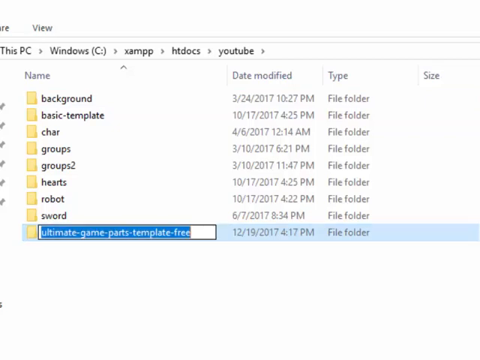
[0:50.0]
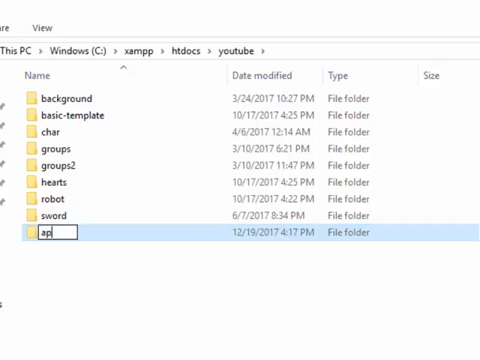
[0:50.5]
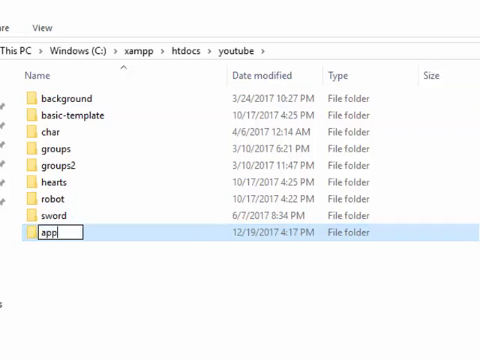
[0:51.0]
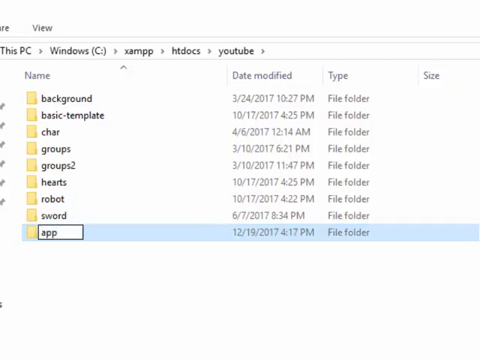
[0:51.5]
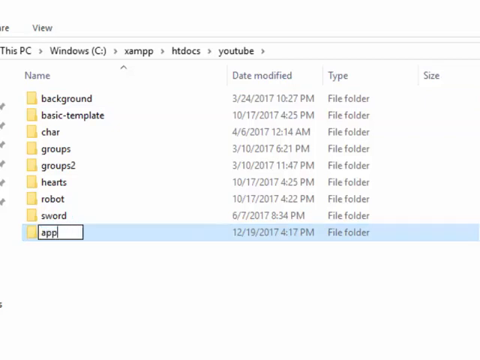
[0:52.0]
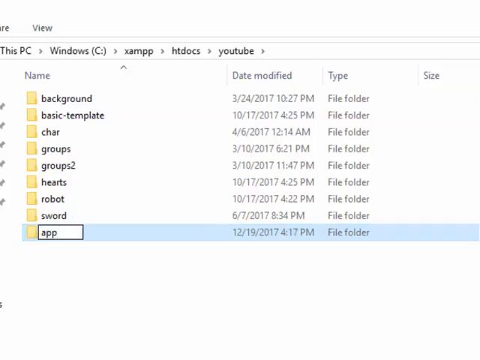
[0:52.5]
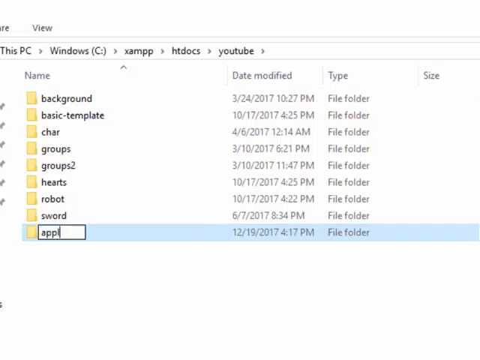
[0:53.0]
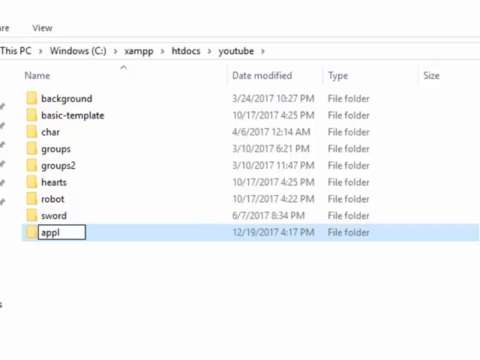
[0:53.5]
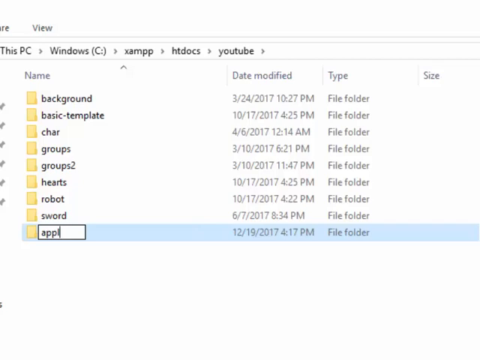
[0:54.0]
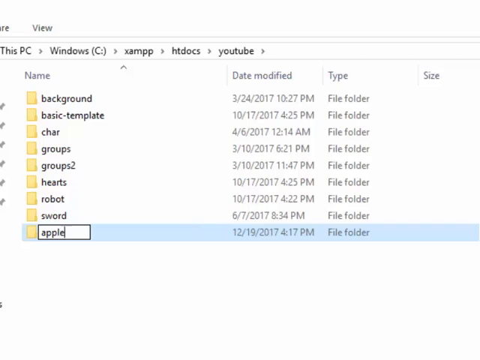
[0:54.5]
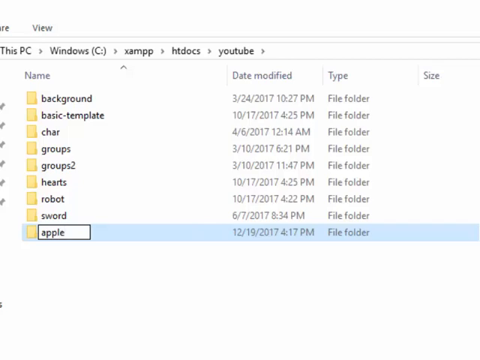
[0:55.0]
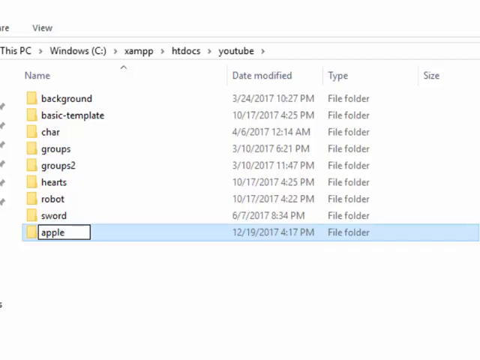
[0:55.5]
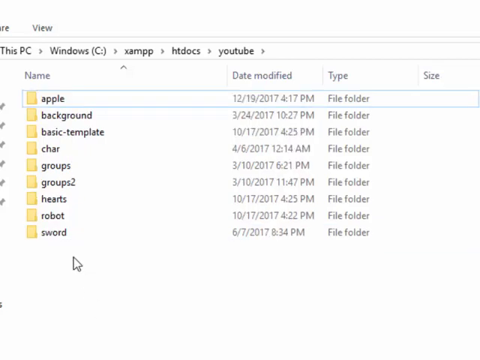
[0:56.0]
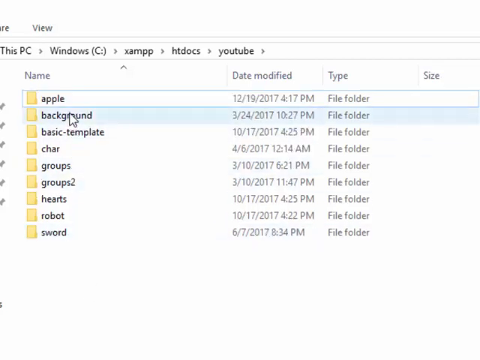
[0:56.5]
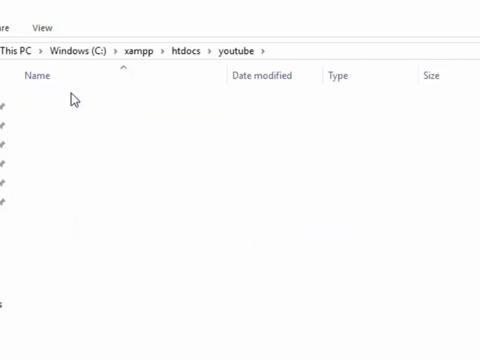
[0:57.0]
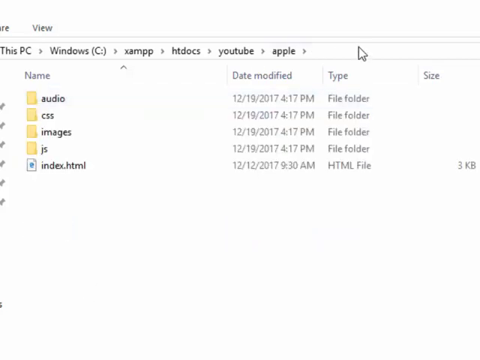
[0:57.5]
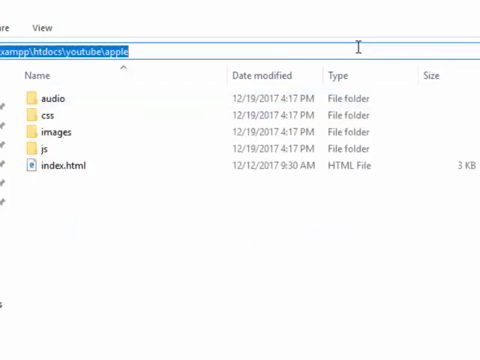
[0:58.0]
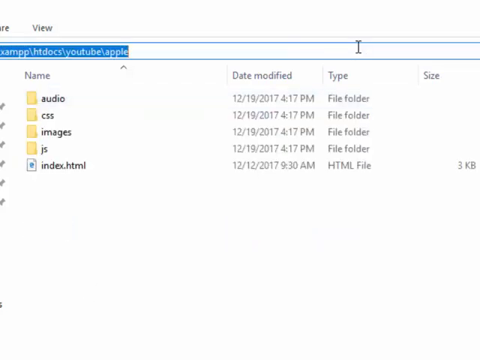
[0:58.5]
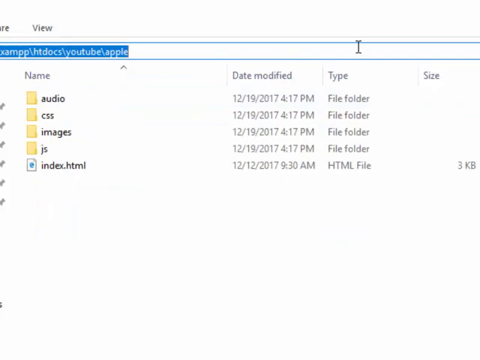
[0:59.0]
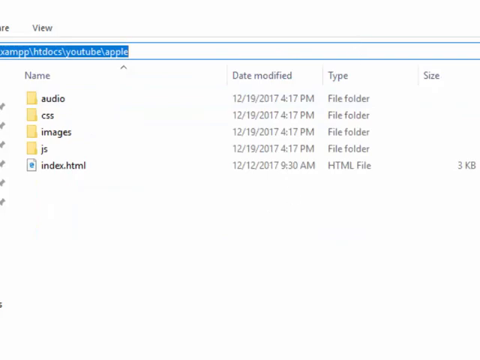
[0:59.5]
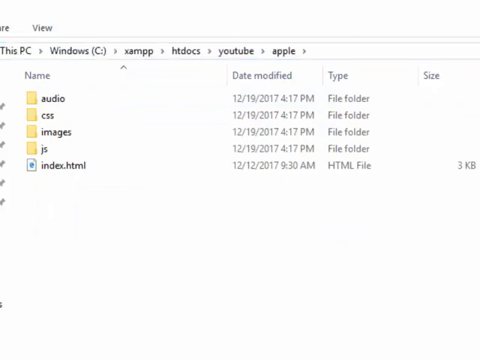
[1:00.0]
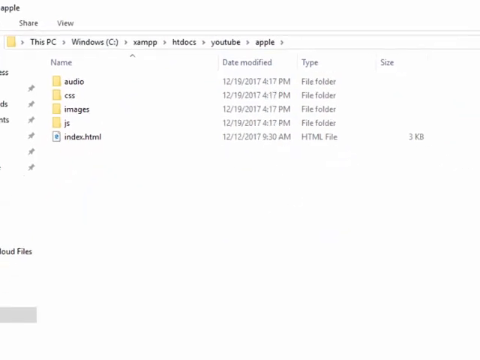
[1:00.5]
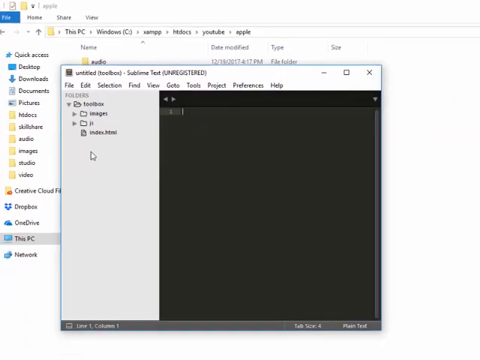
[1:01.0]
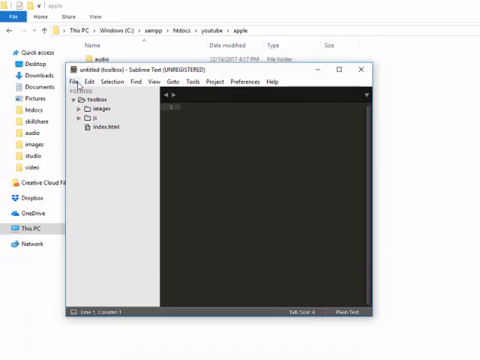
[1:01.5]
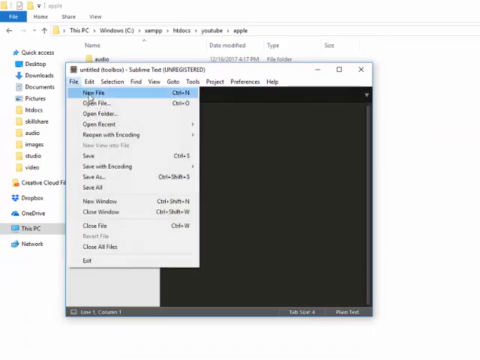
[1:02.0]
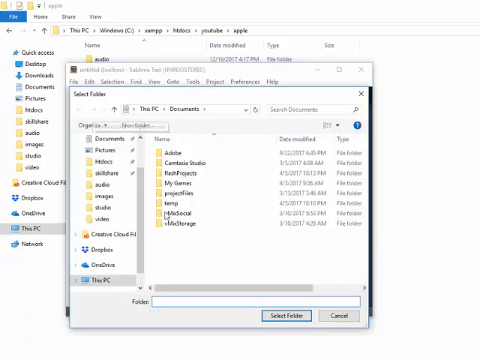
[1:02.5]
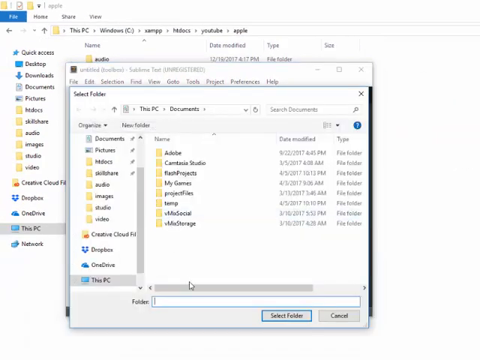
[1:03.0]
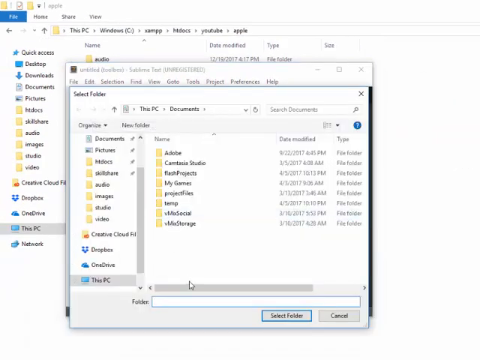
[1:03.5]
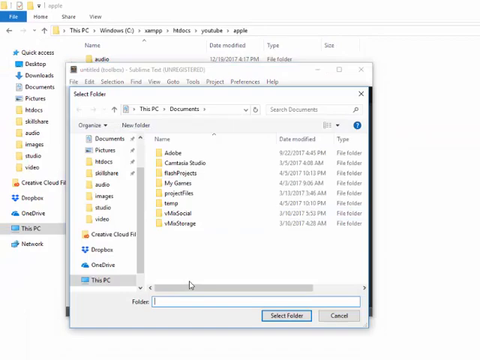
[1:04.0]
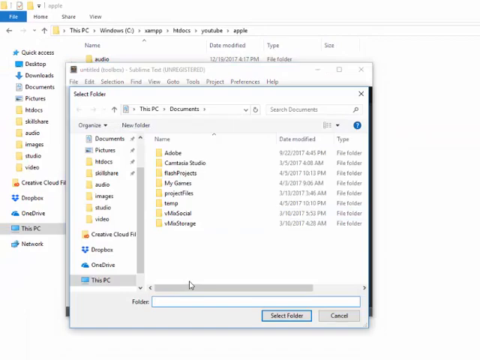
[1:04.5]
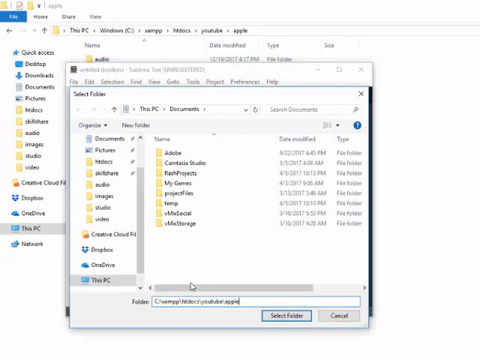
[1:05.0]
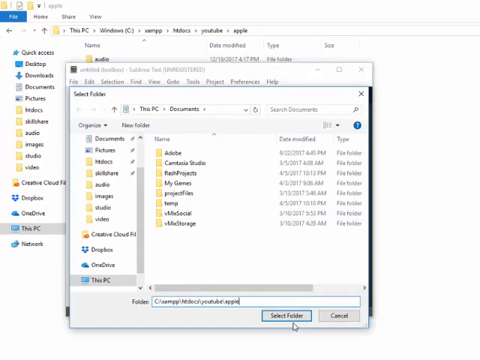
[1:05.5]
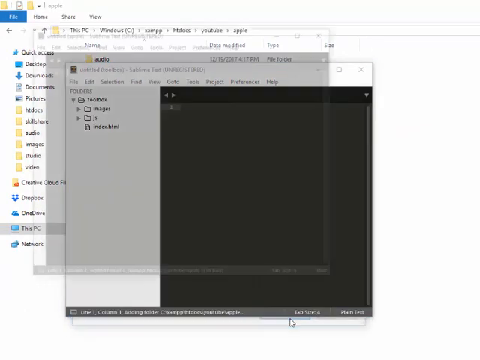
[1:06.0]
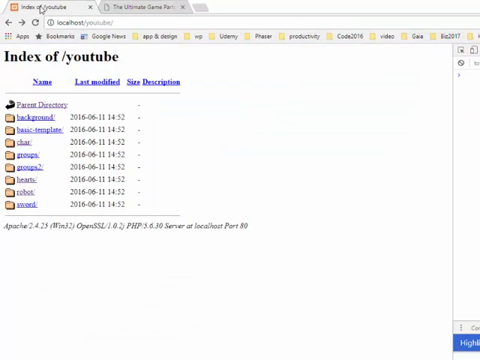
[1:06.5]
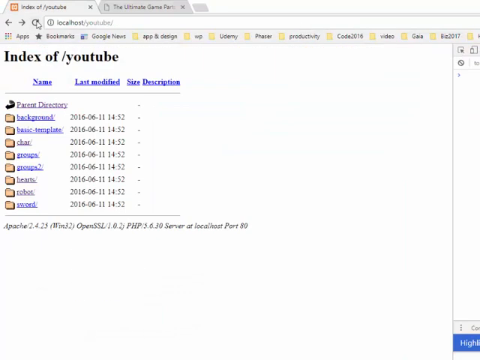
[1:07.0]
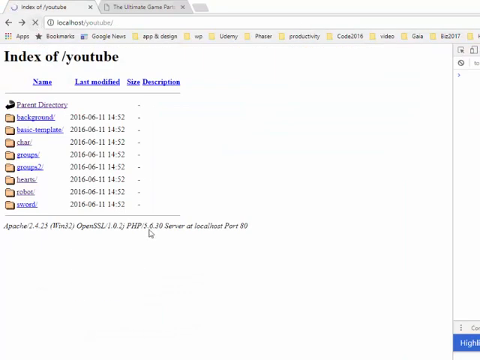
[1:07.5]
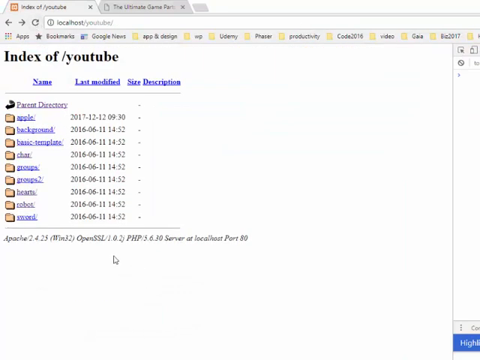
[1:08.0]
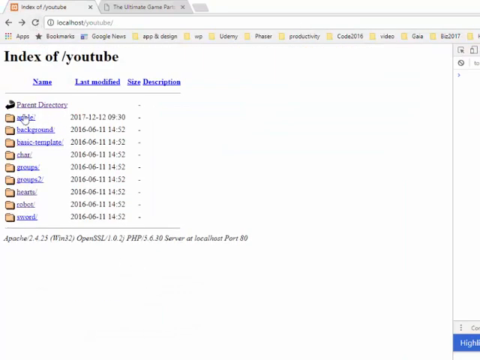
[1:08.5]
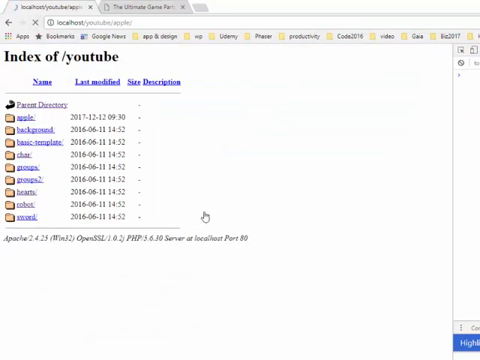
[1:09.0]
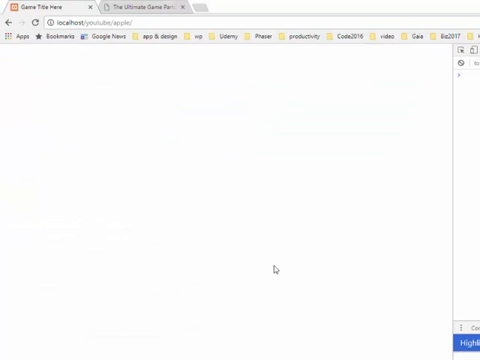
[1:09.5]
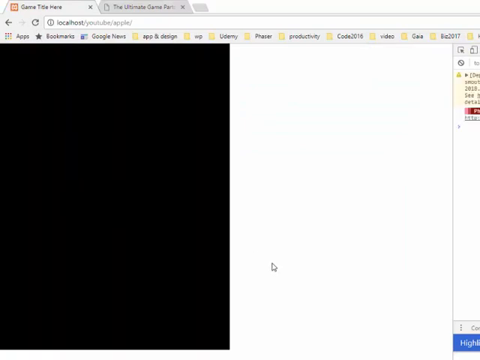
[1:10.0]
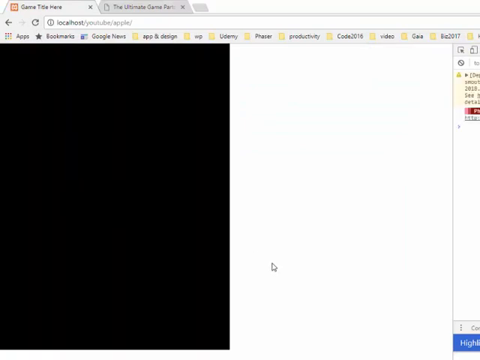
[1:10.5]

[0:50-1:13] A computer folder window with a solid white background is open; the bar at the top reads "this PC", arrow, "Windows", arrow, "XAMPP", arrow, "HT Docs", arrow, "YouTube". Below are nine folders: background, basic template, chart, groups, groups two, hearts, robot, sword, and ultimate game parts template free. The user highlights the last folder and renames it Apple, slowly typing it into the field, and the Apple folder goes to the beginning. They click on it, then click on the top bar and highlight the words in it. The view zooms out and a toolbox pops up: a split screen with folders on the left side and a different screen on the right. They click file, then open file, another dialog box pops up, and they open a folder called Apple. The windows go away, revealing a browser tab titled "index of YouTube". They hit the reload button and click the Apple link, and the video ends on a black and white split screen.